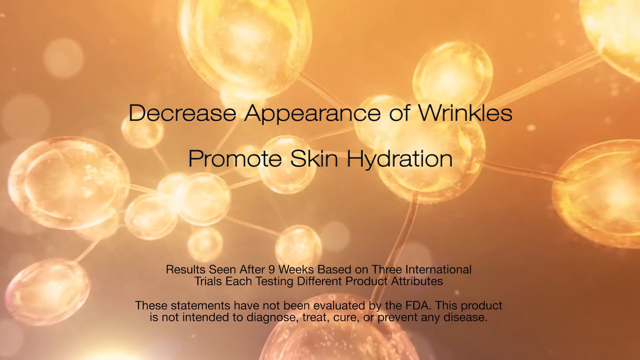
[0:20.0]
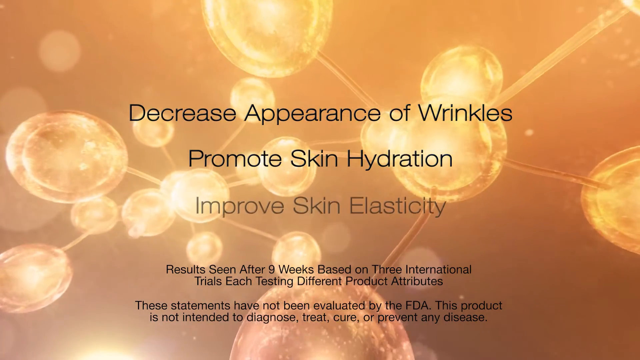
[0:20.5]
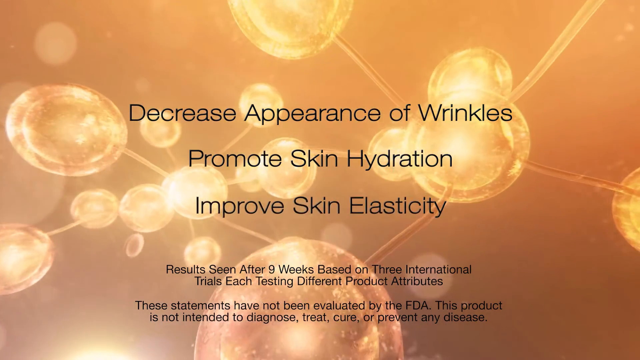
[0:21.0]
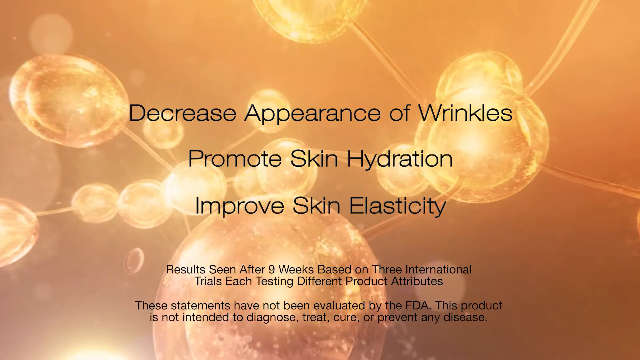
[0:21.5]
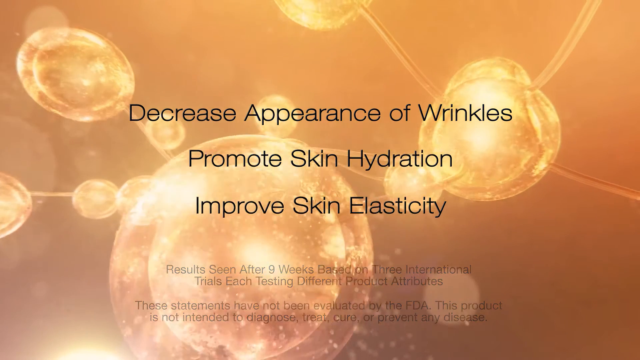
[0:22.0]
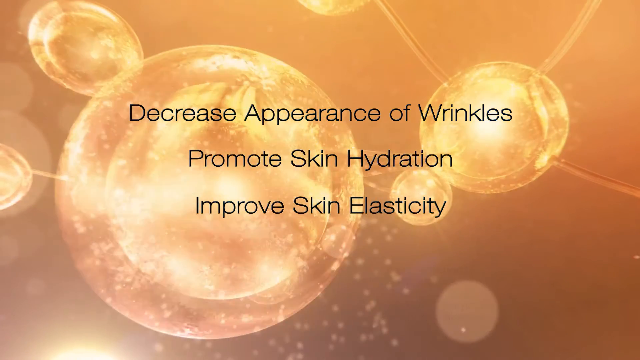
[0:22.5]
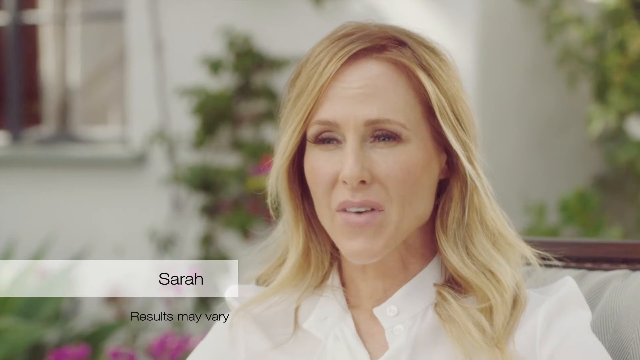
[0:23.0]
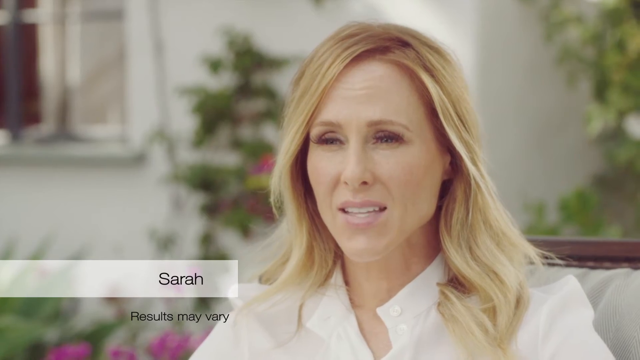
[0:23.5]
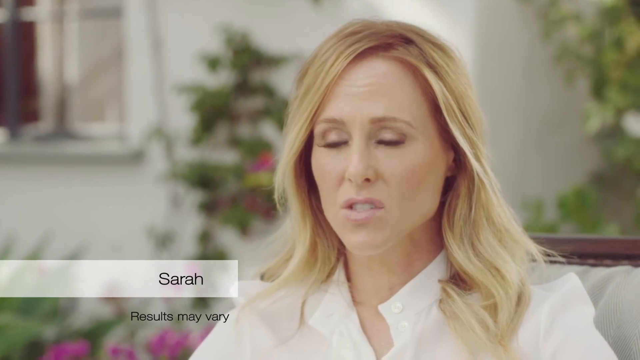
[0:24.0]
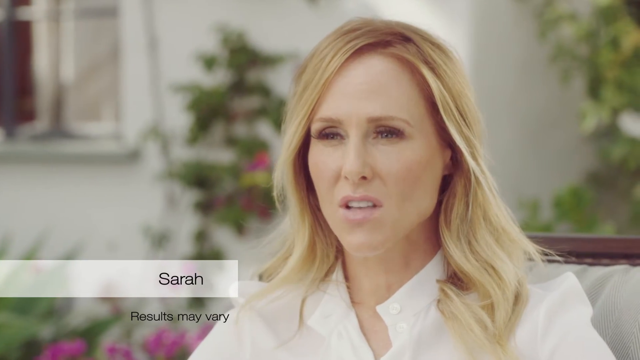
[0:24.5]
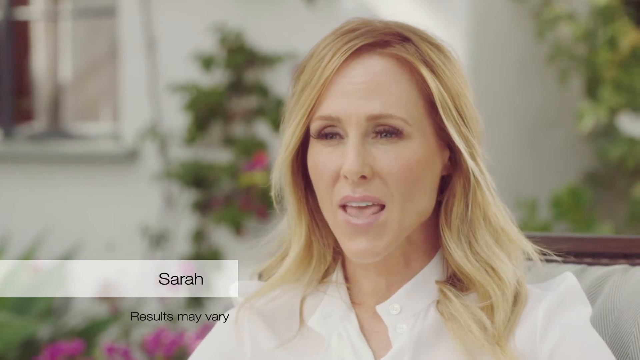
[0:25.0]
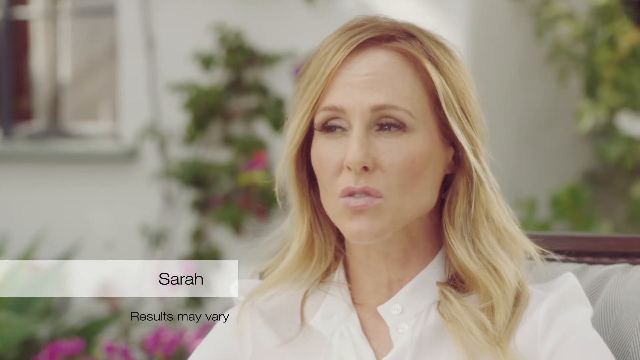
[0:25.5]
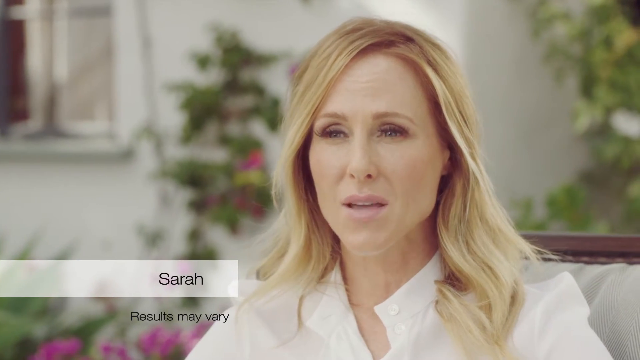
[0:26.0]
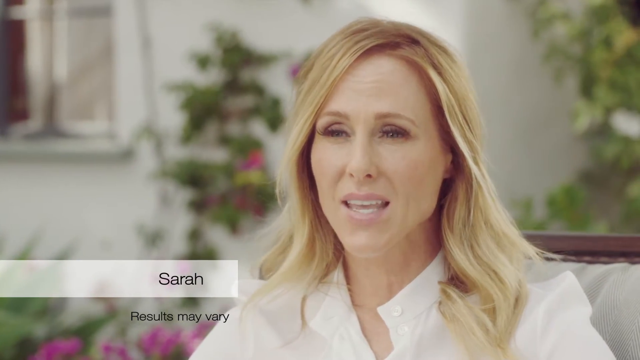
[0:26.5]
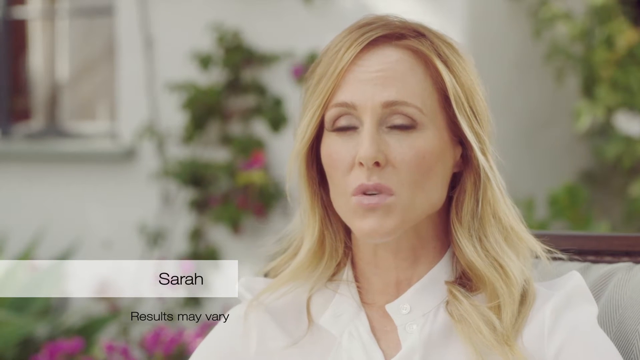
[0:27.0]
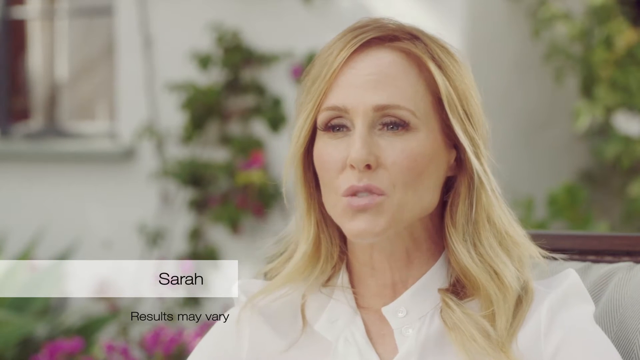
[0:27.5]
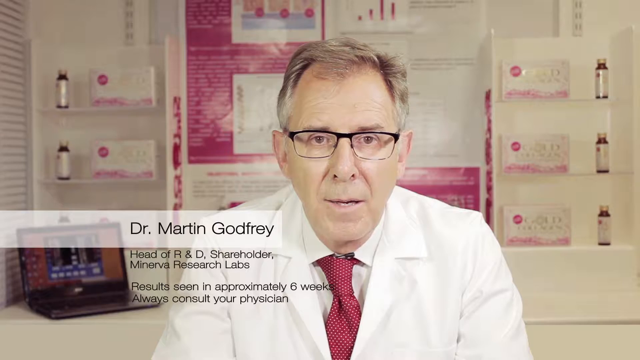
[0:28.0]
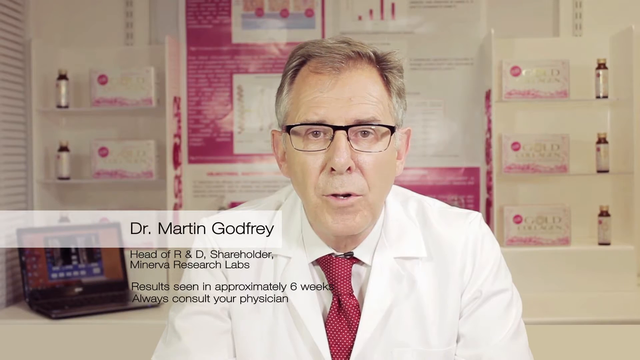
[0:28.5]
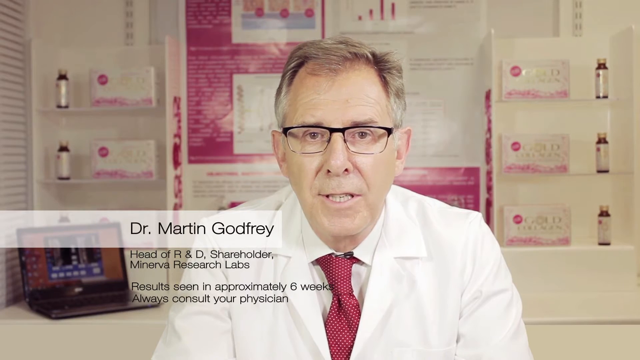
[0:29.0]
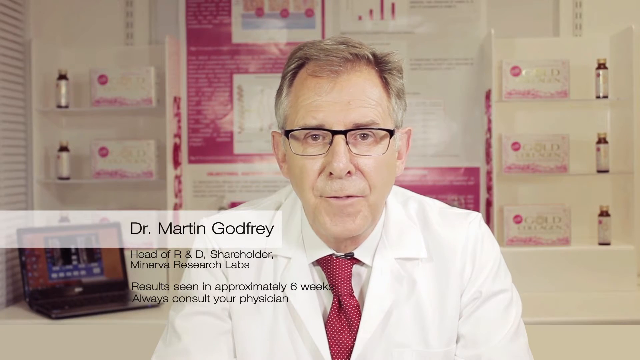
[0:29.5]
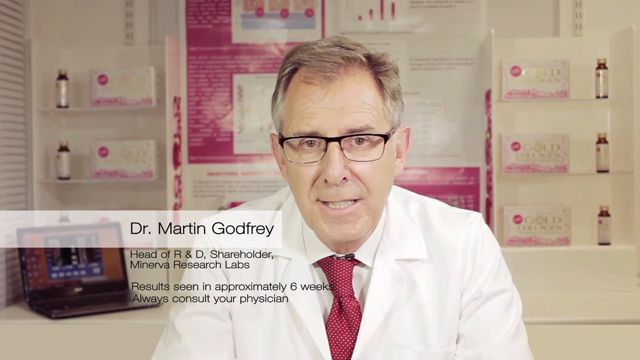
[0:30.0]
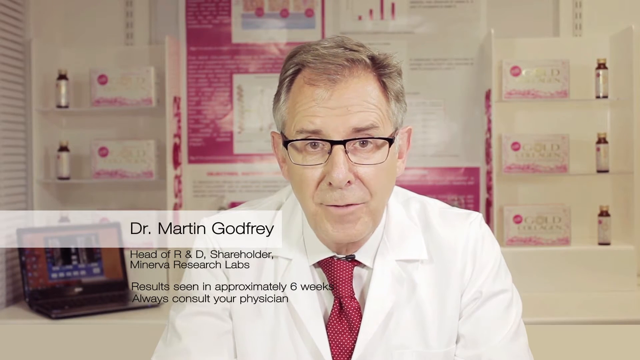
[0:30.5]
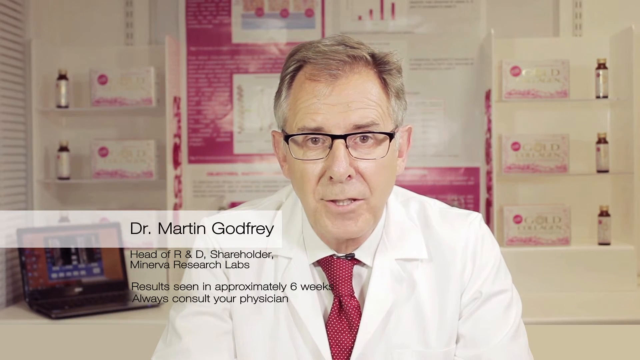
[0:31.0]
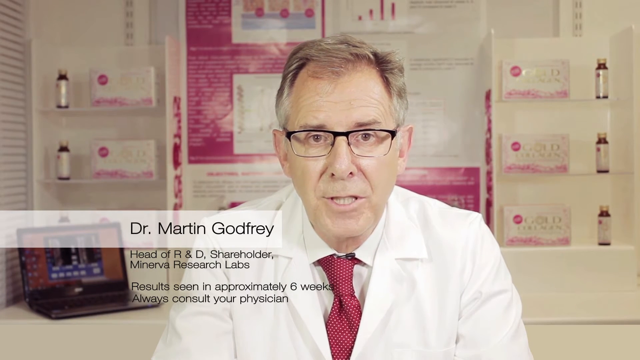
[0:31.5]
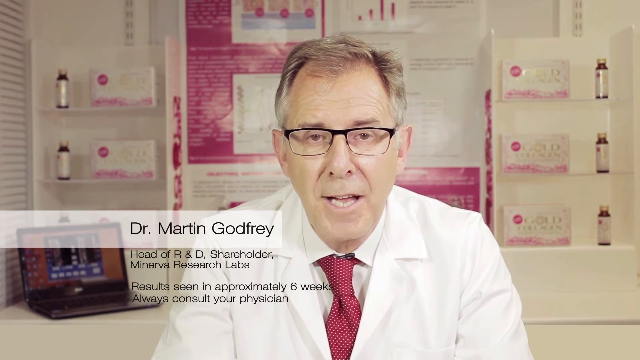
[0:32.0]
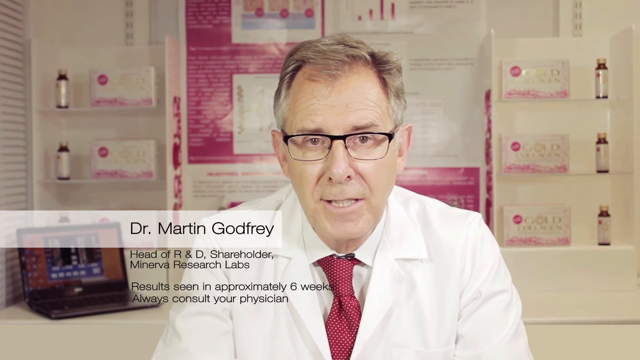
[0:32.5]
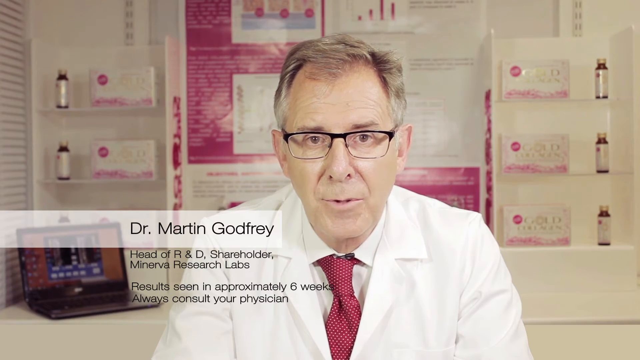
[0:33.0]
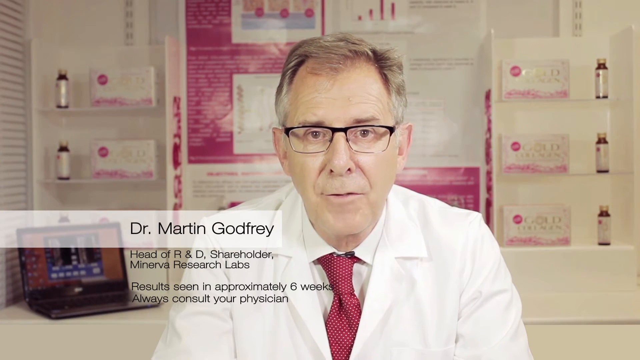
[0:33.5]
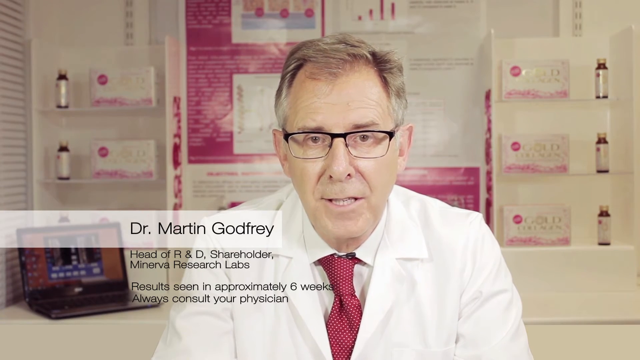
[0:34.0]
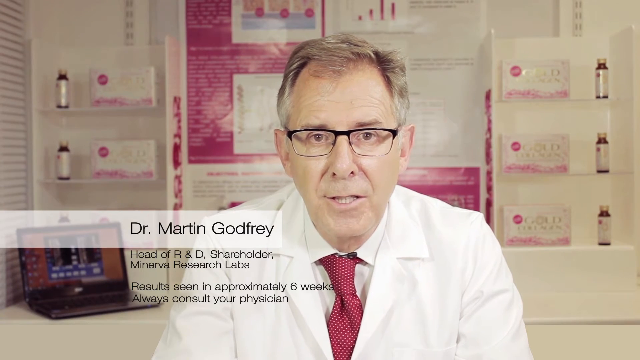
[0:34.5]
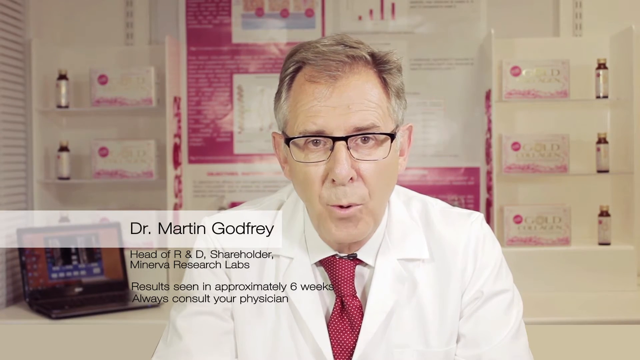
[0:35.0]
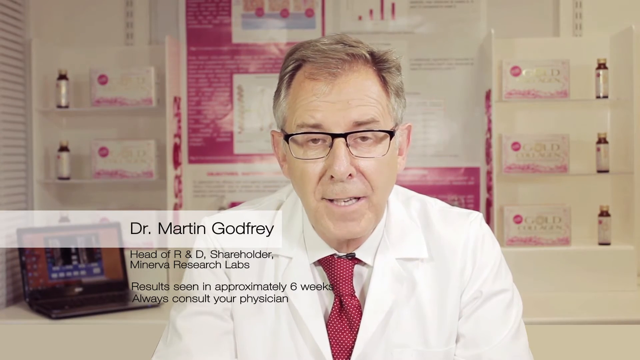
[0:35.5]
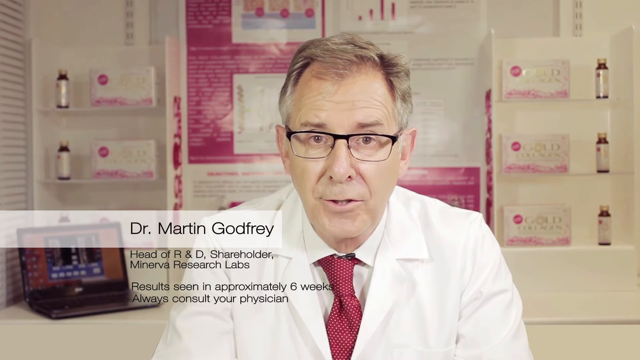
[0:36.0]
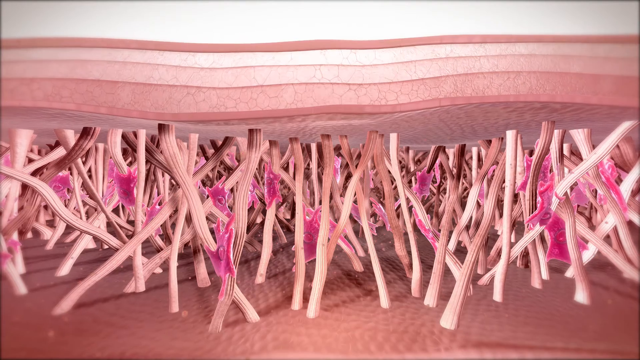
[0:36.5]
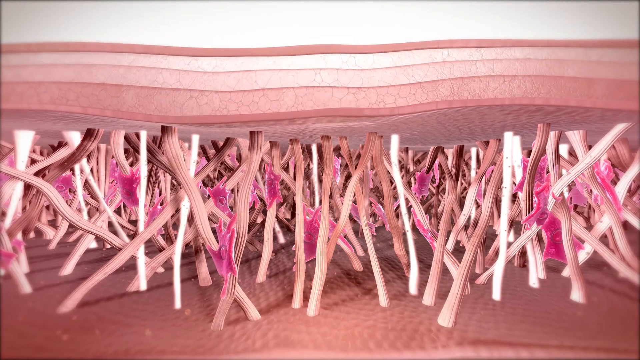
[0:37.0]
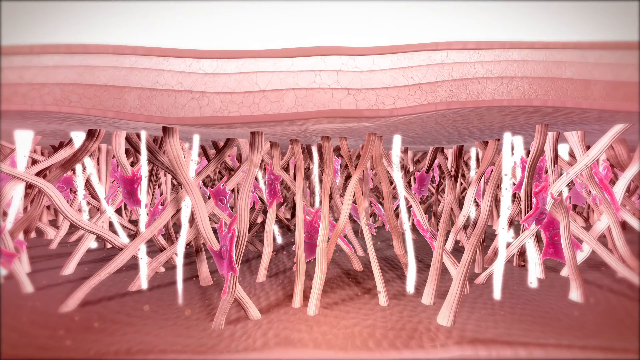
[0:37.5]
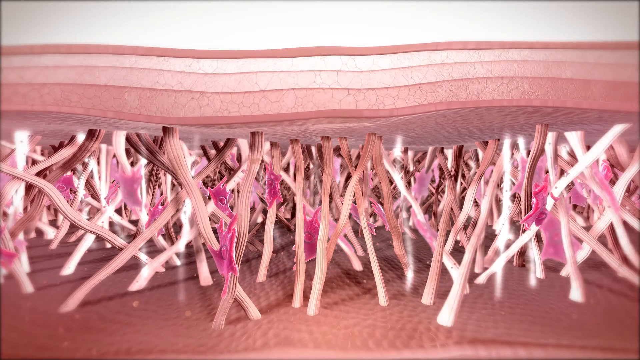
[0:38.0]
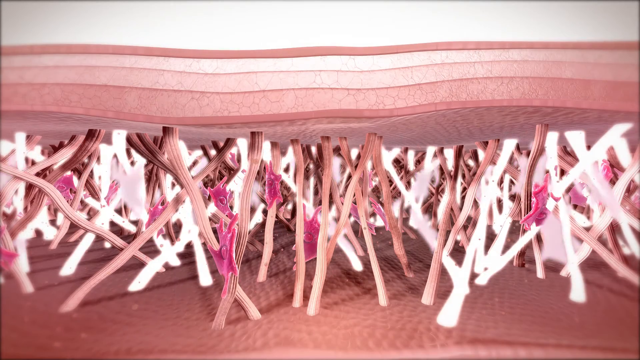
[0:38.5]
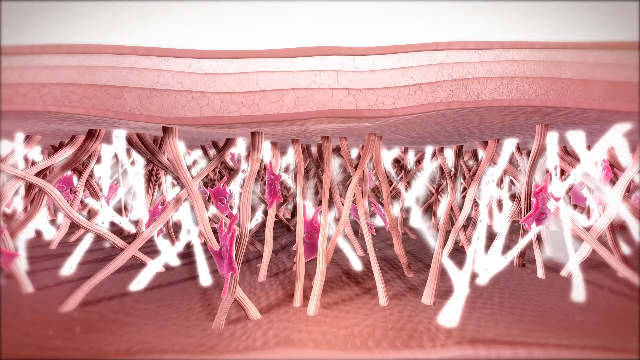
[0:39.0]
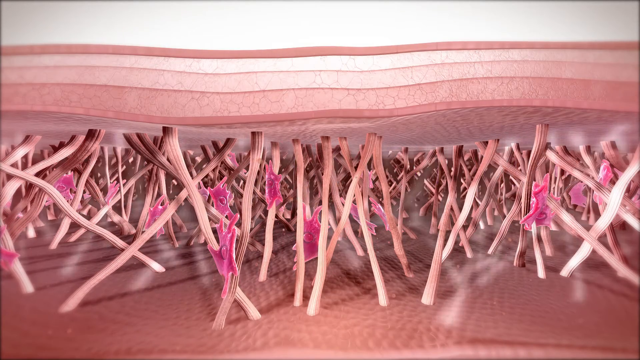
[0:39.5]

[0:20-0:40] The video states that the golden collagen decreases the appearance of wrinkles, promotes skin hydration and improves skin elasticity. A lady, Sarah, appears, probably giving her own review of the product. Then a doctor, Dr. Martin Guthrie, appears, with the pack and bottle of the product in his background and text that includes "R&D, shareholder." He apparently says results are best in approximately six weeks as prescribed by your physician, and he seems to be speaking to the viewer. The video then shows how the product works when taken into the system. The lady in the video has very nice skin, as does the doctor. Since only women and a doctor are shown talking about it, the product seems to be aimed at women, and its name is possibly Pacify.